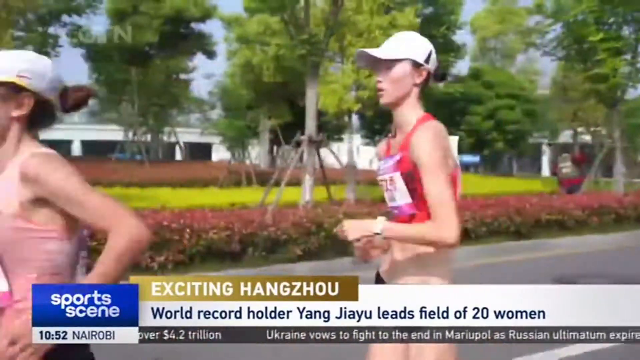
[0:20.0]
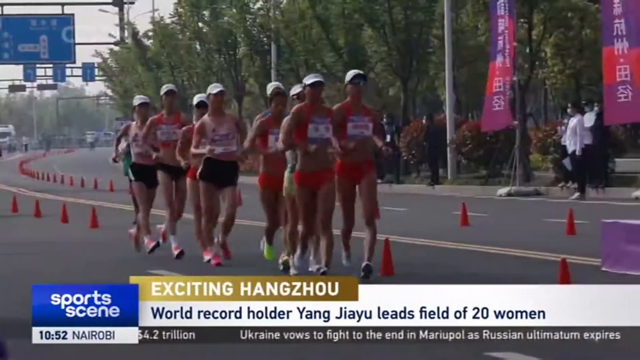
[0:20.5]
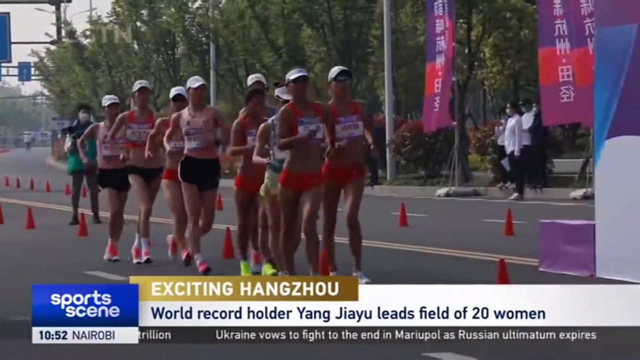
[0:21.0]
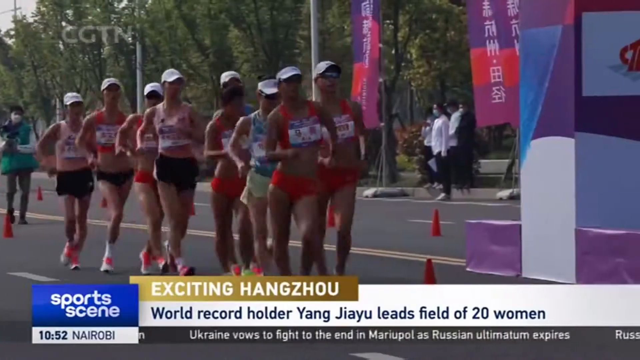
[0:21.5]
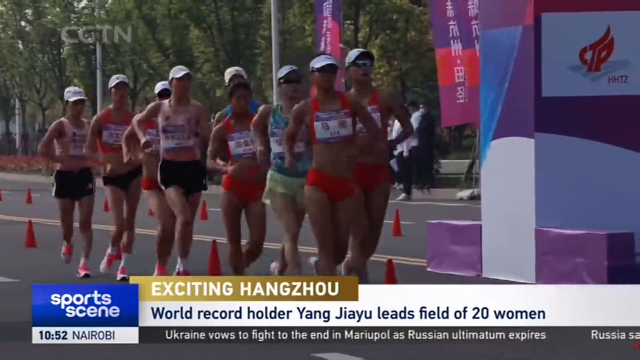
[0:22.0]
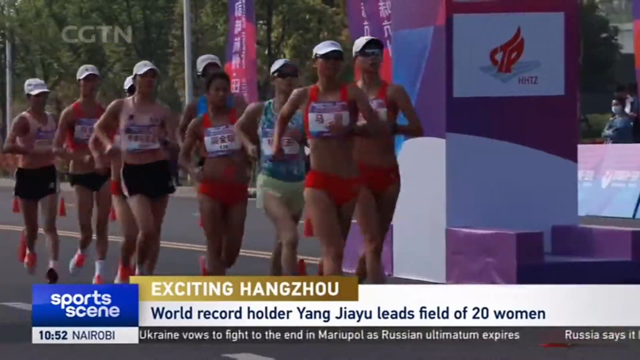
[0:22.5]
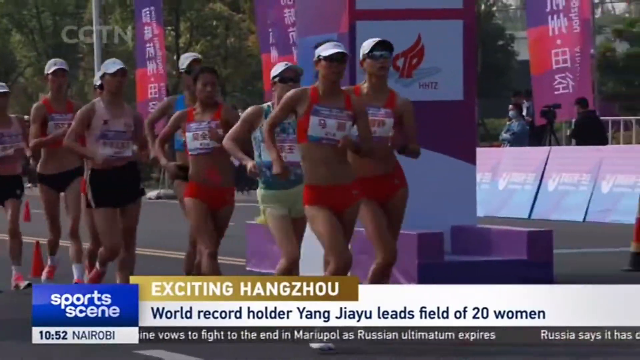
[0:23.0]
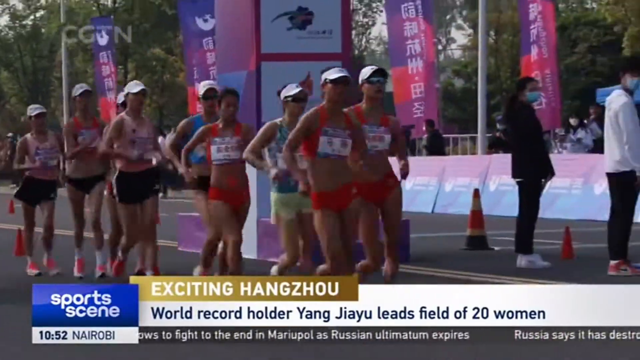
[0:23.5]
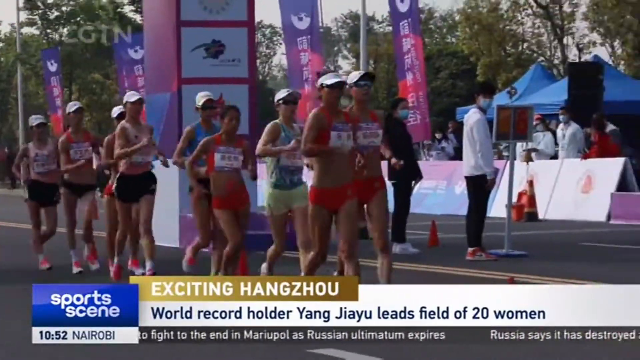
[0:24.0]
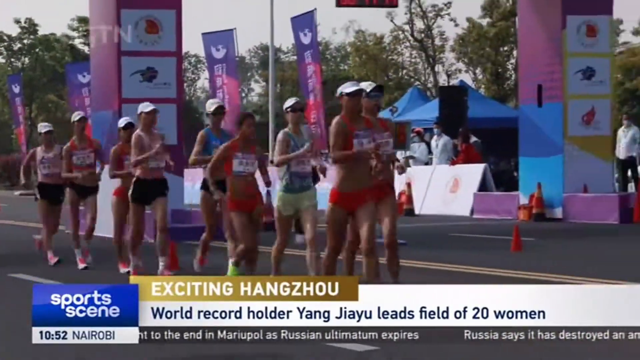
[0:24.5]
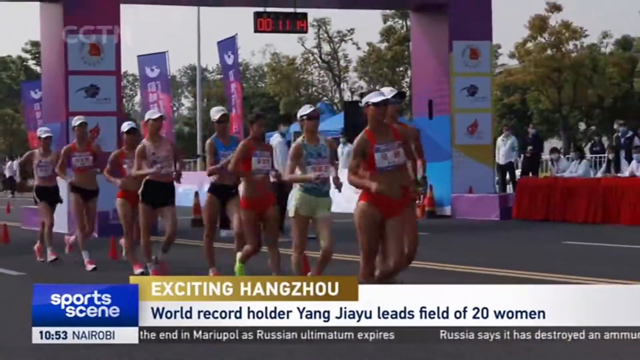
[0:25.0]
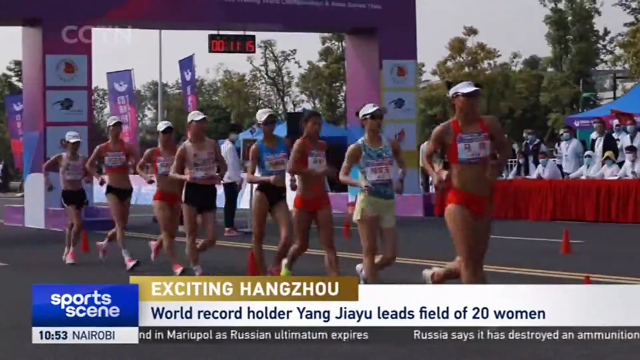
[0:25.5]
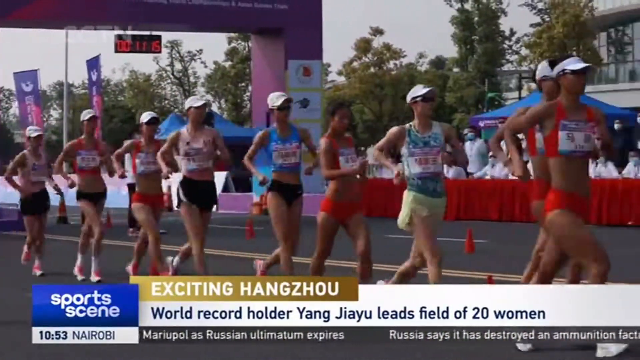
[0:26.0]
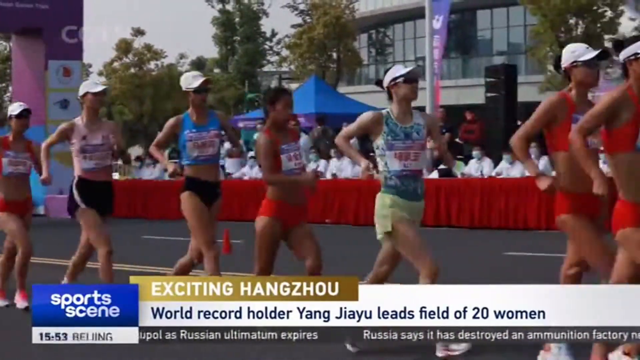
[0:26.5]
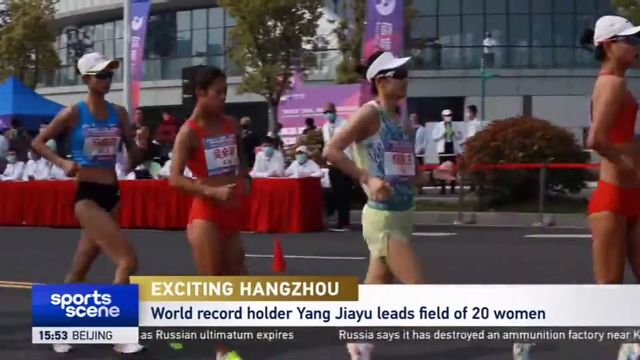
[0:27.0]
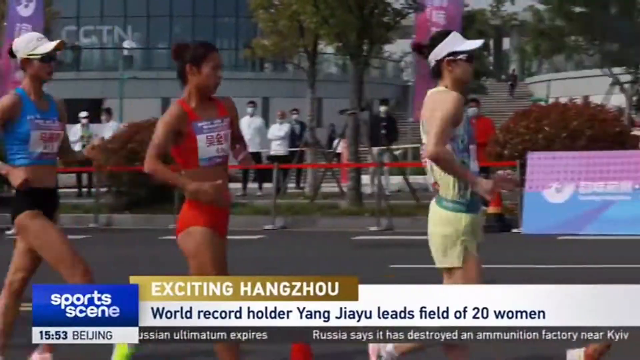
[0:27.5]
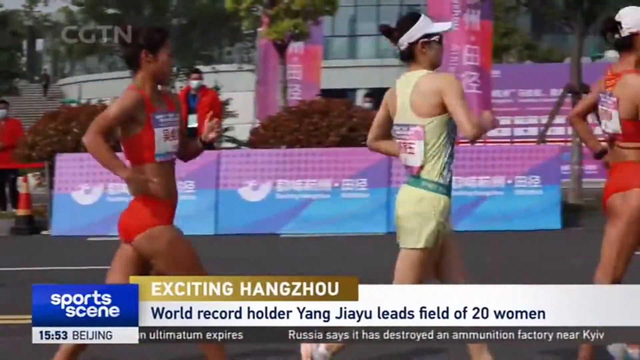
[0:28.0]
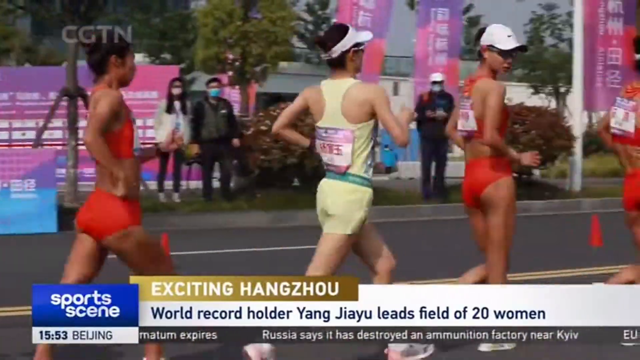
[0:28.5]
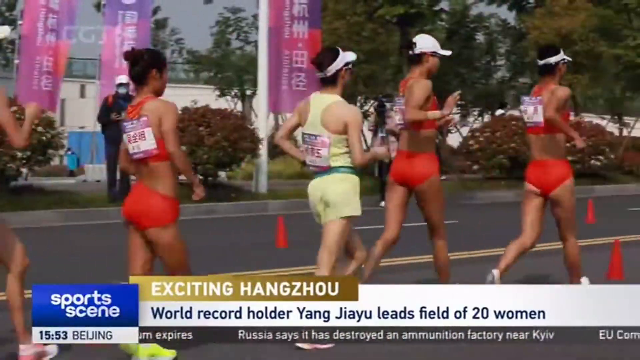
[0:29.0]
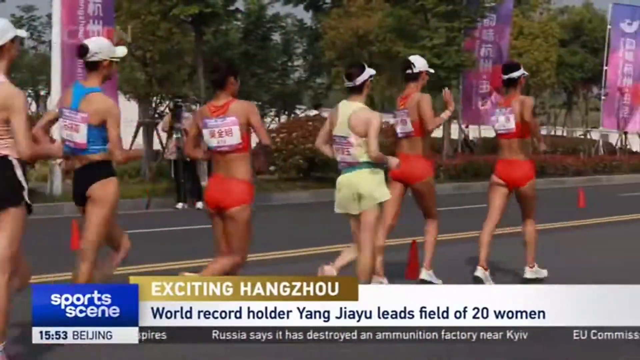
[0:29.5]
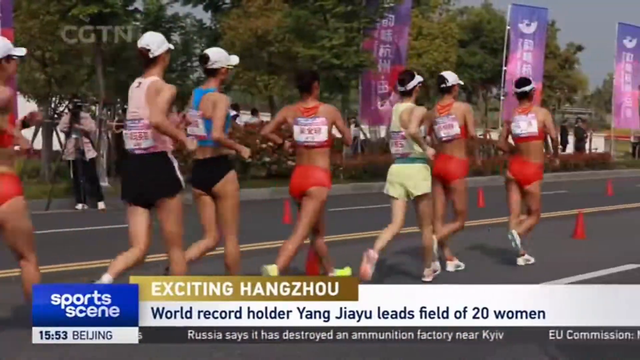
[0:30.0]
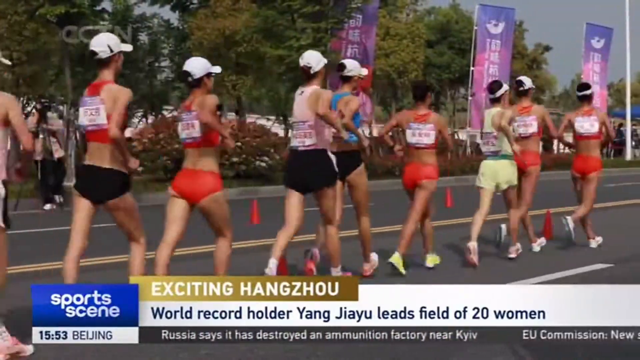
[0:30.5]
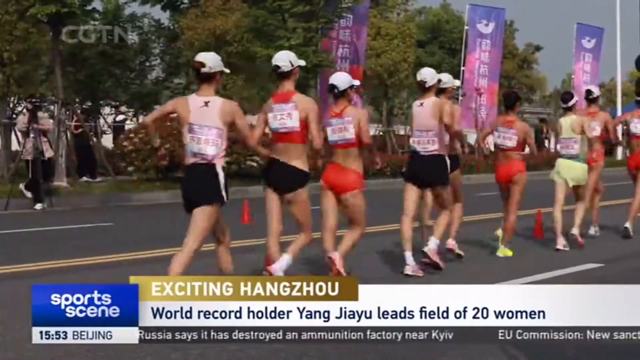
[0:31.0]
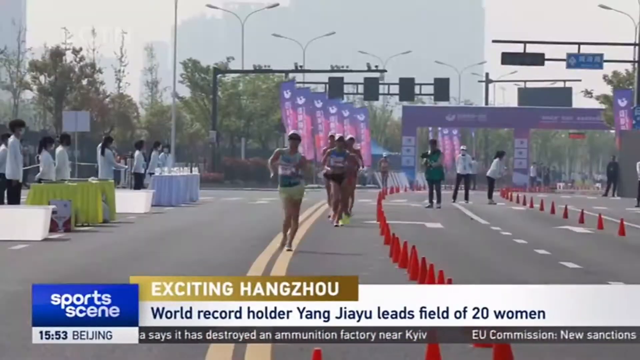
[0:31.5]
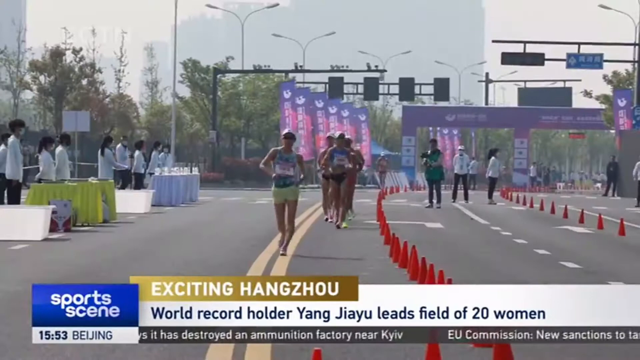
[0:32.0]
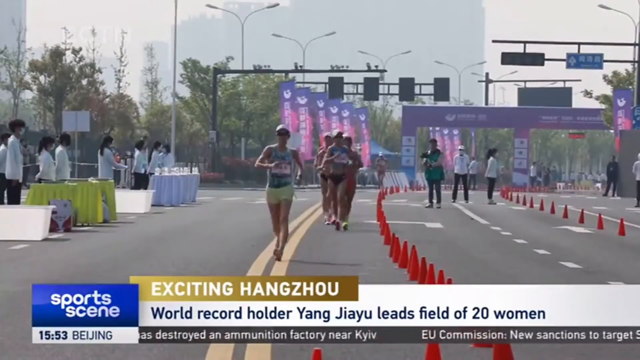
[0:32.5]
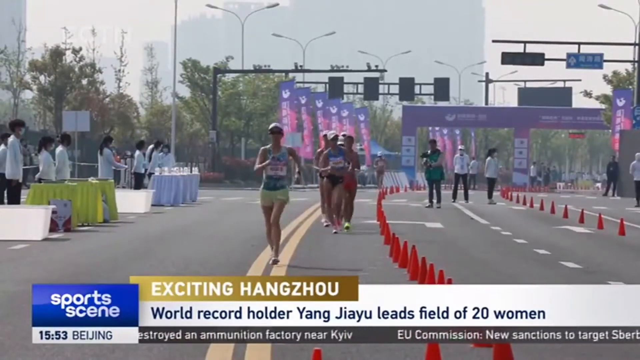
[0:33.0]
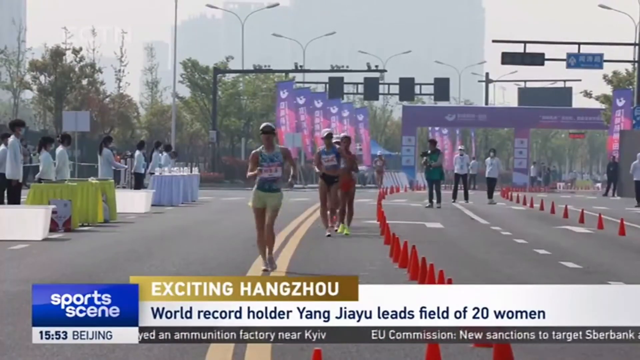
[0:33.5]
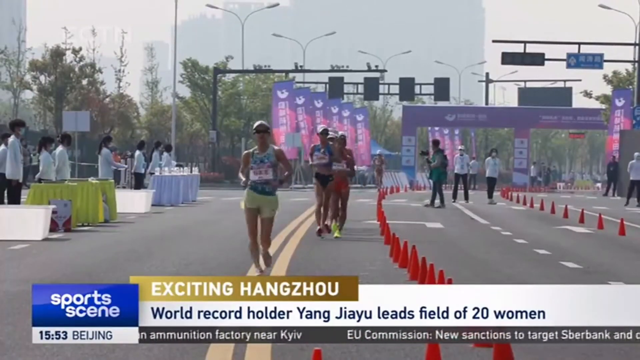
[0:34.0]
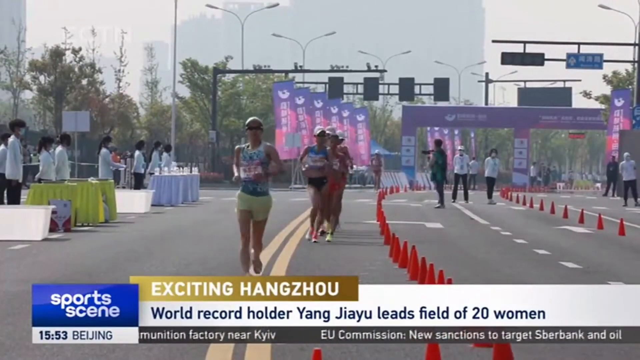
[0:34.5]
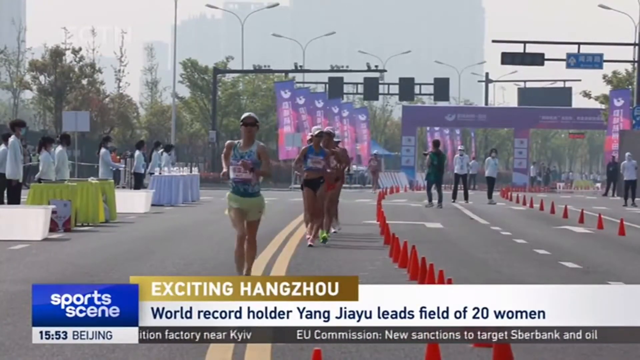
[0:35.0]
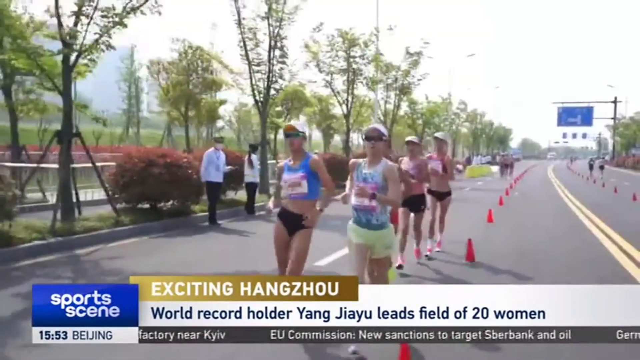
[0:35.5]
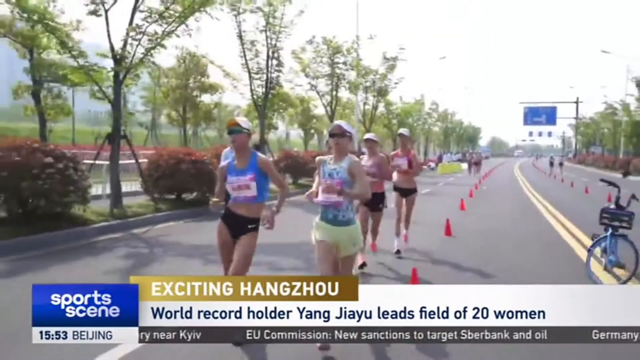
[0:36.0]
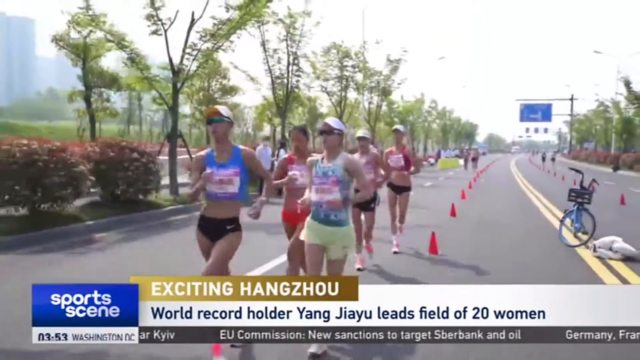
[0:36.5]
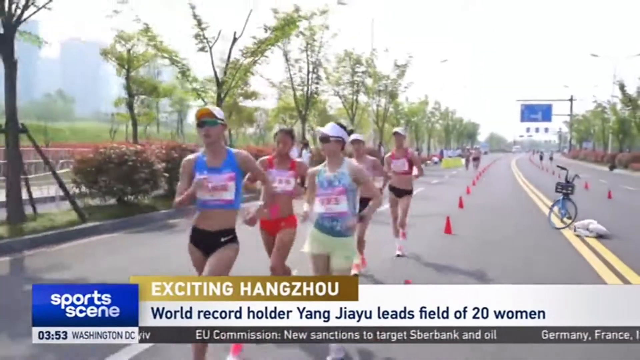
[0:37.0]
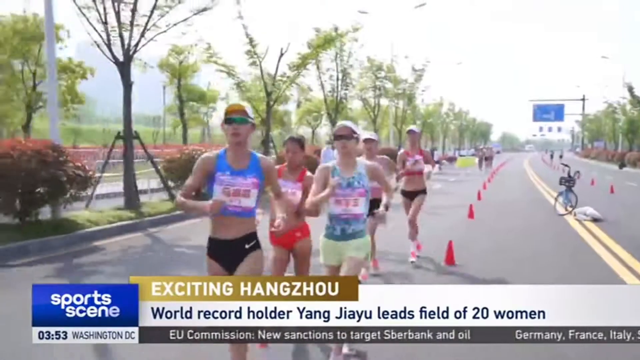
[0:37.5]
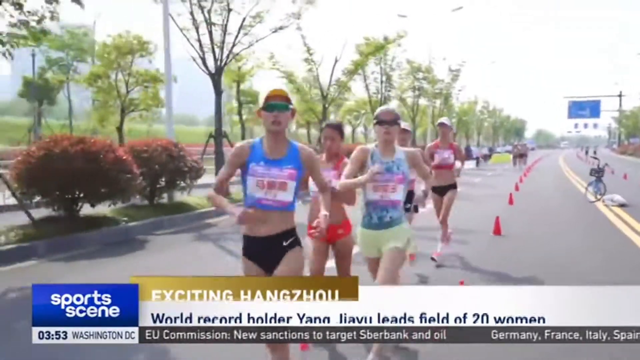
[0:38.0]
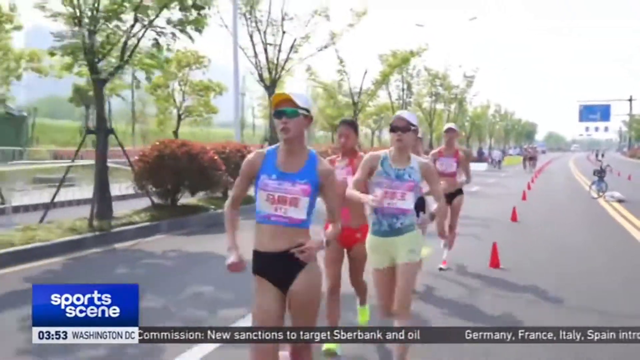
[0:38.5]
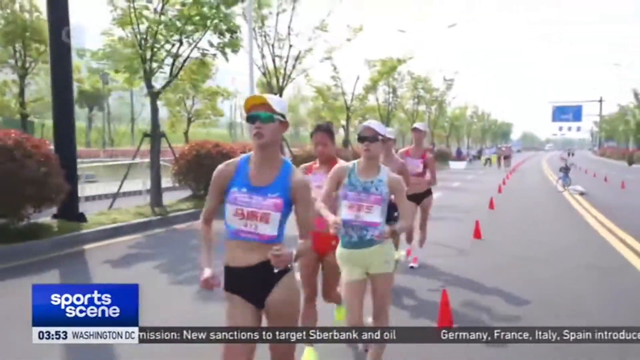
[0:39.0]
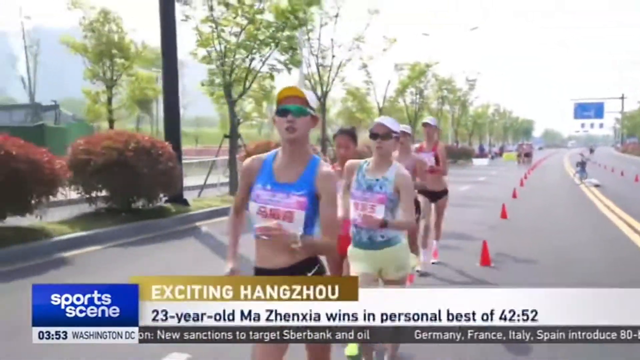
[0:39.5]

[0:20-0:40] The coverage of the race continues, with a headline below reading "exciting Hangzhou world record holder Yang Jiayu leads field of 20 women." Many women run down a road at a pretty frequent pace in a single-file line. The camera moves to the right and, as the women pass by, picks them up from a side angle and then from a back angle as they continue down the road. There are lots of bystanders, some with booths in front of them that apparently hold bottles of water. The camera then shows the race from a front point of view, with lots of cones placed one in front of the other in the road and traffic lights in the background, as the runners continue down the road.